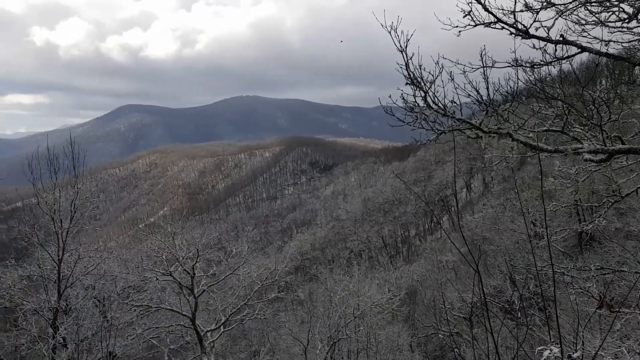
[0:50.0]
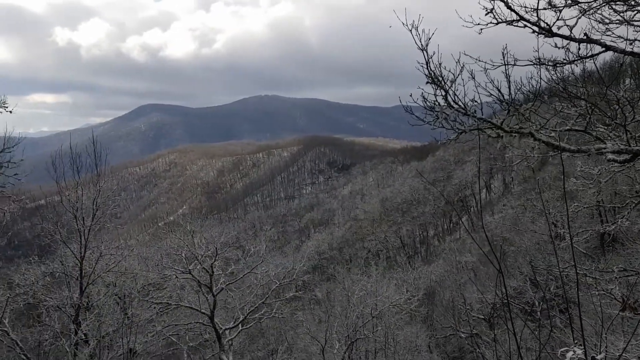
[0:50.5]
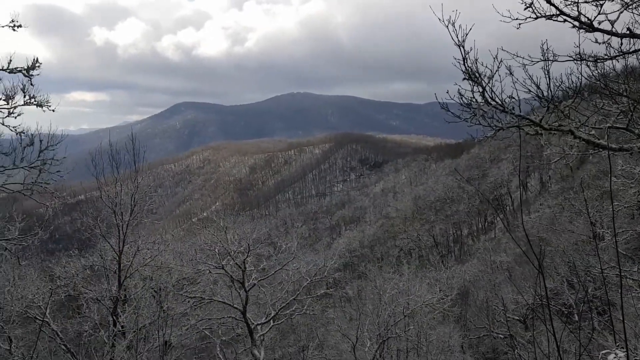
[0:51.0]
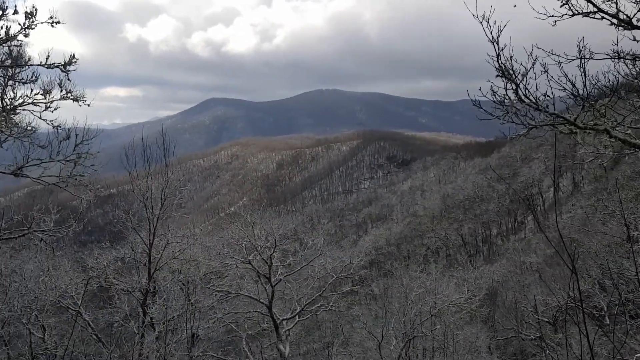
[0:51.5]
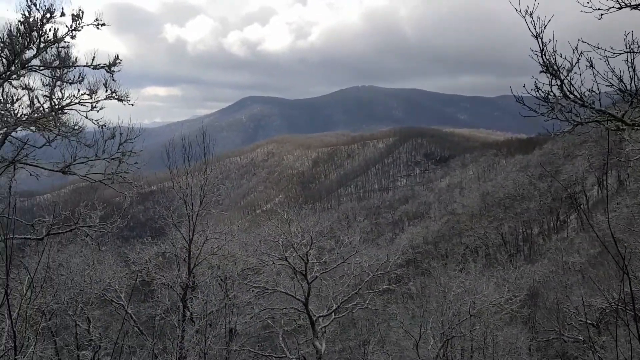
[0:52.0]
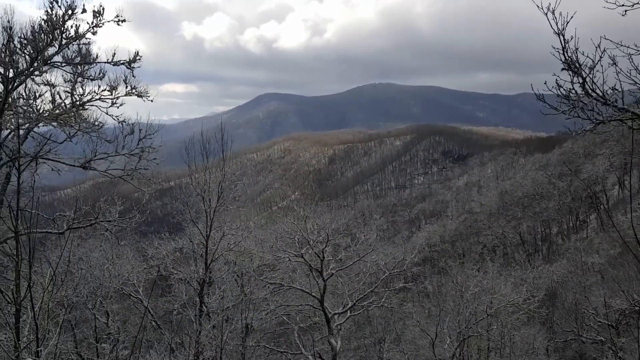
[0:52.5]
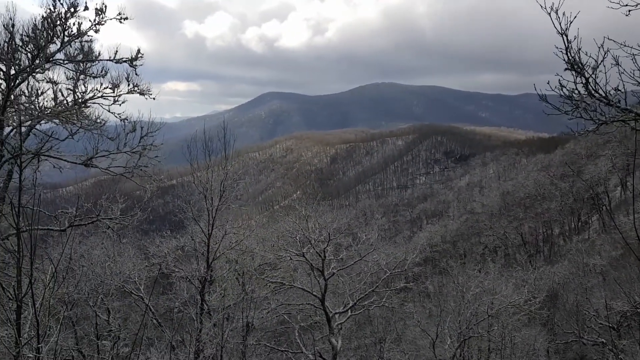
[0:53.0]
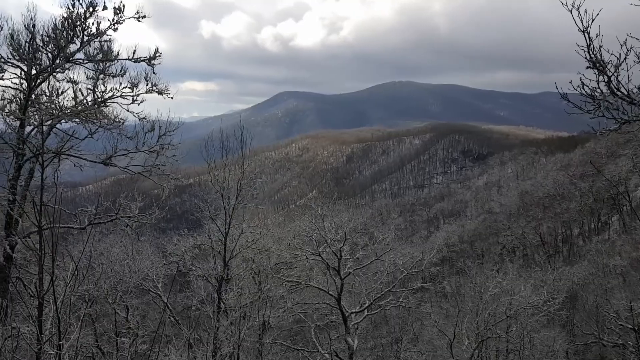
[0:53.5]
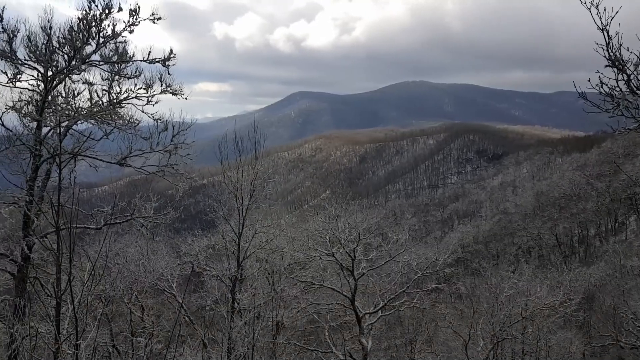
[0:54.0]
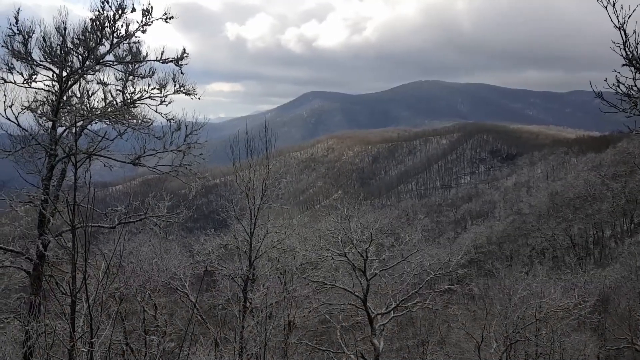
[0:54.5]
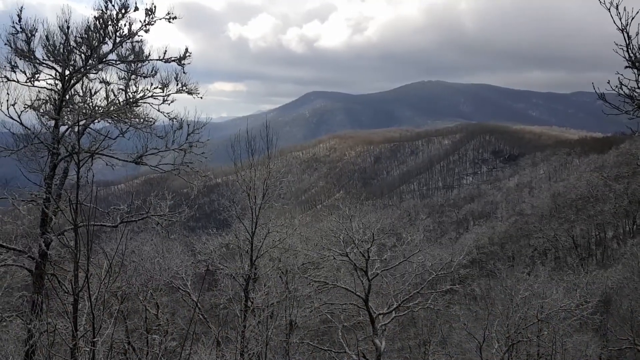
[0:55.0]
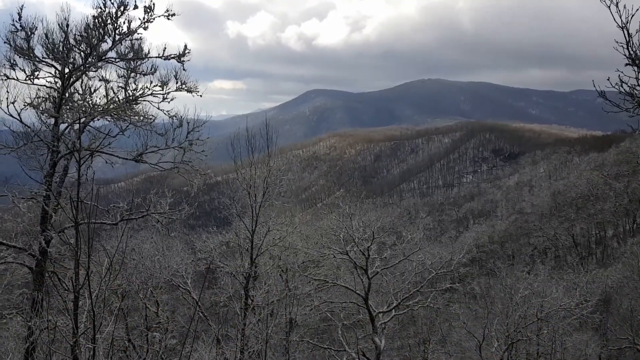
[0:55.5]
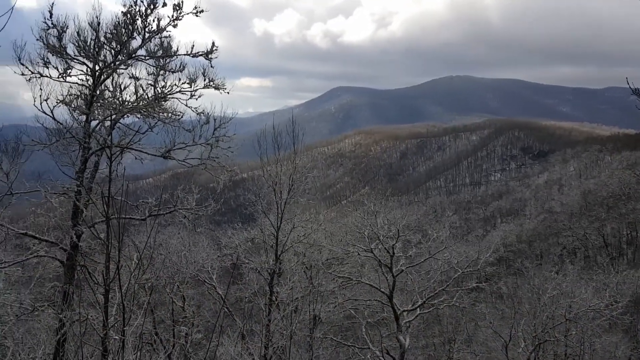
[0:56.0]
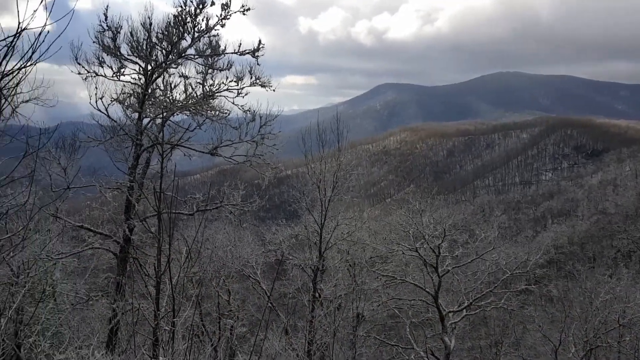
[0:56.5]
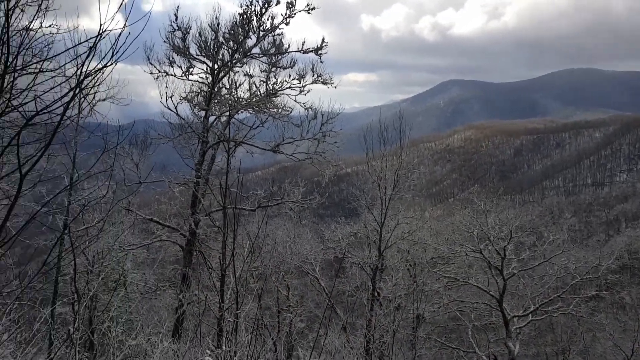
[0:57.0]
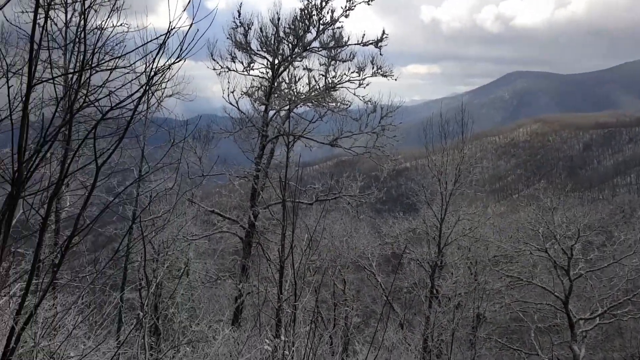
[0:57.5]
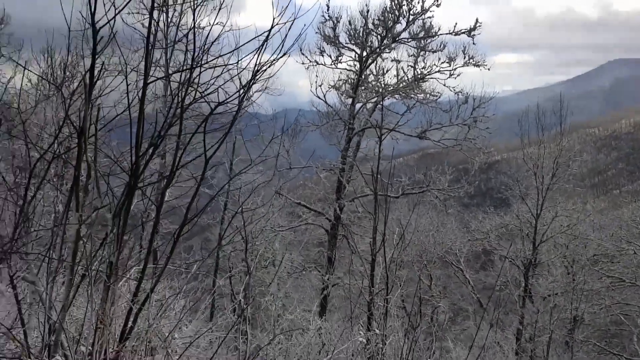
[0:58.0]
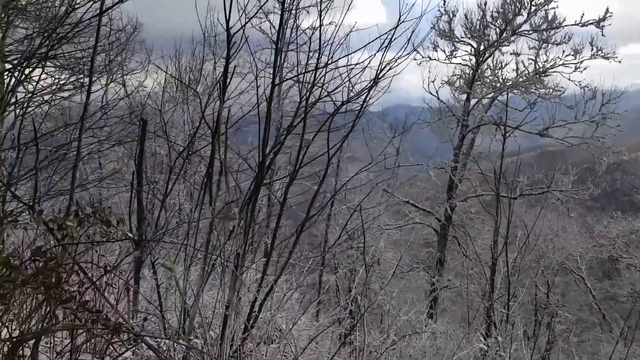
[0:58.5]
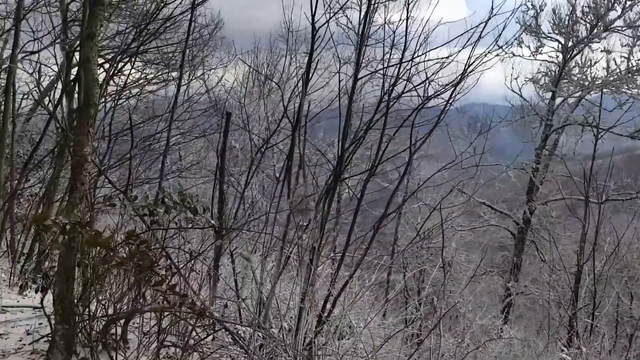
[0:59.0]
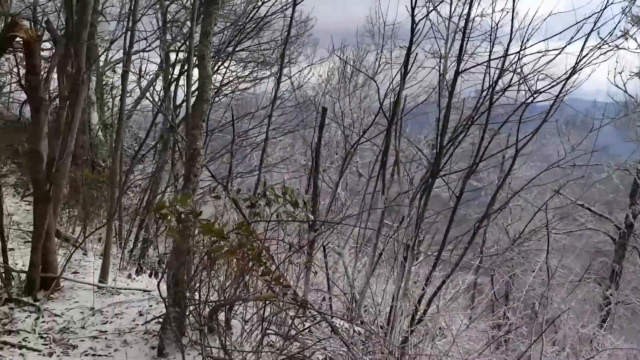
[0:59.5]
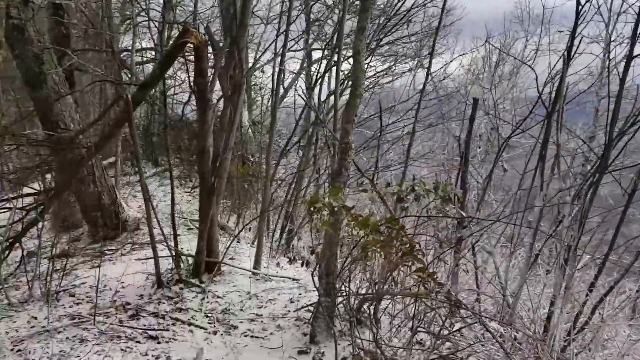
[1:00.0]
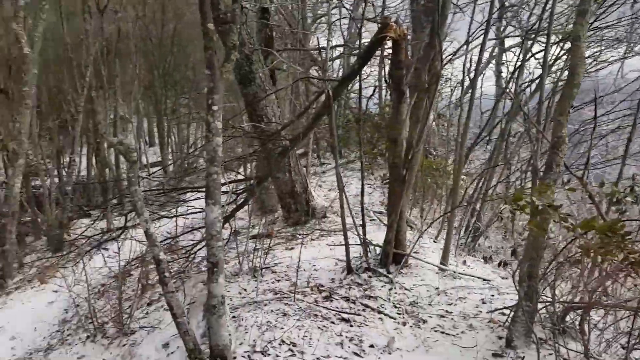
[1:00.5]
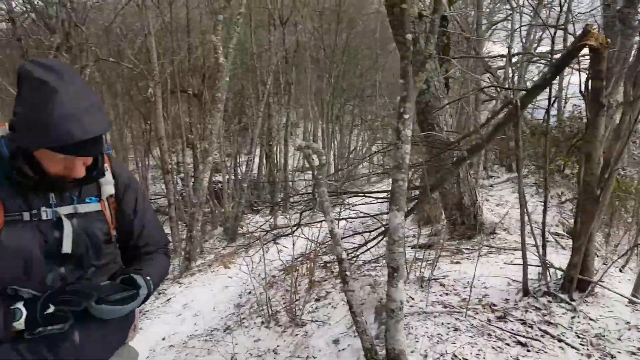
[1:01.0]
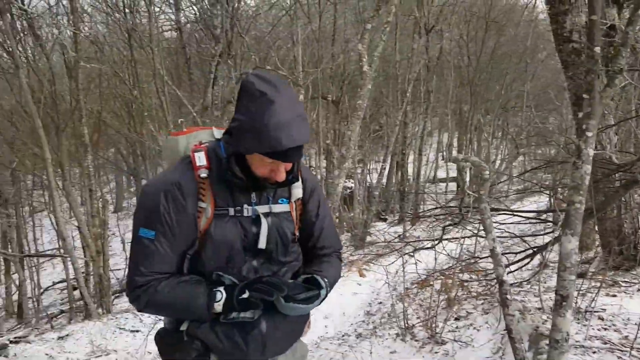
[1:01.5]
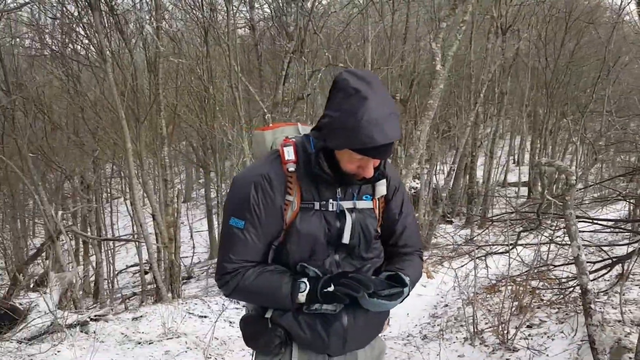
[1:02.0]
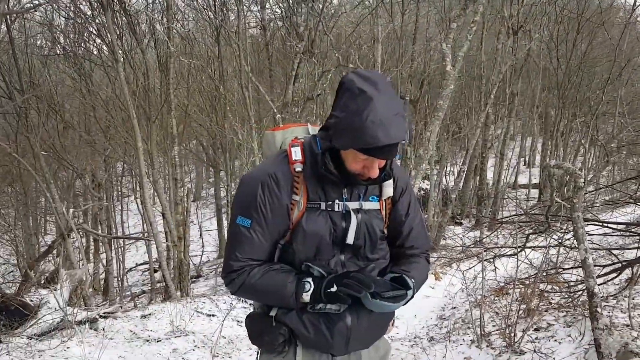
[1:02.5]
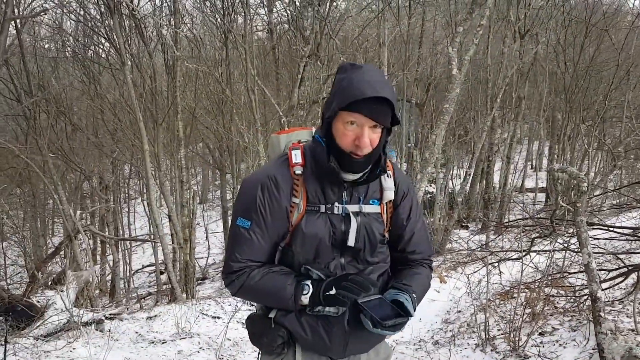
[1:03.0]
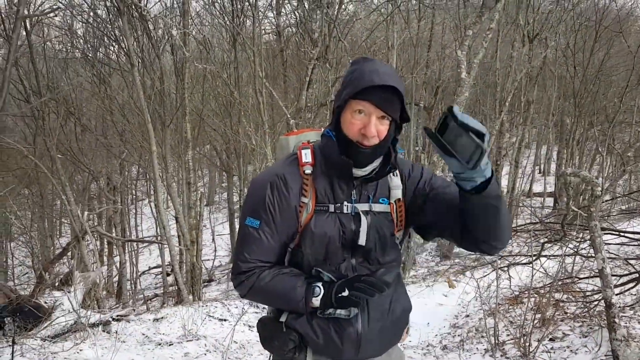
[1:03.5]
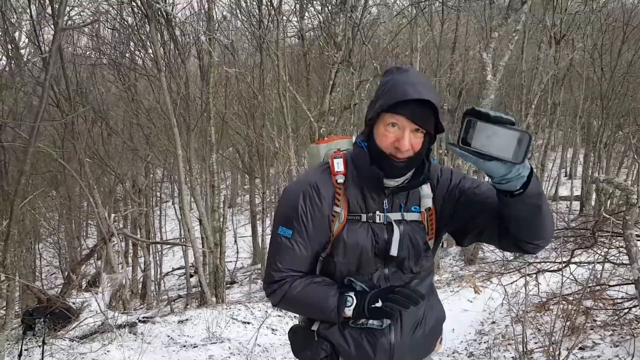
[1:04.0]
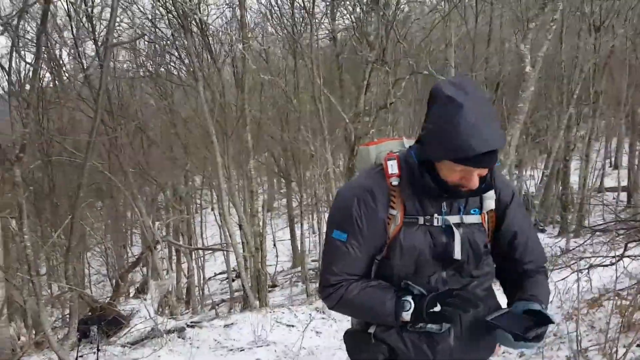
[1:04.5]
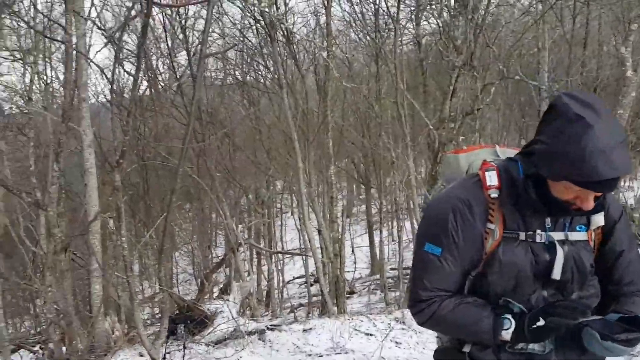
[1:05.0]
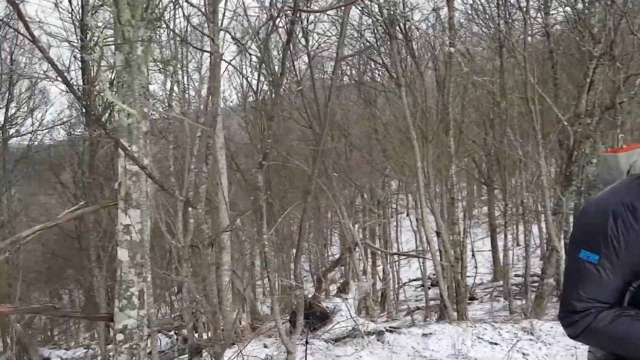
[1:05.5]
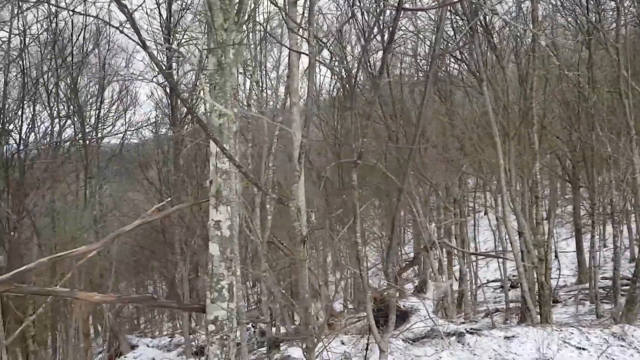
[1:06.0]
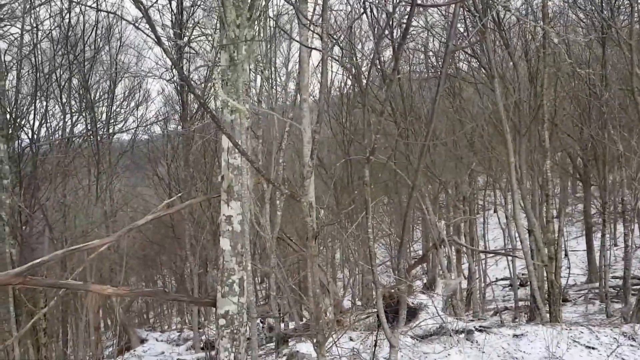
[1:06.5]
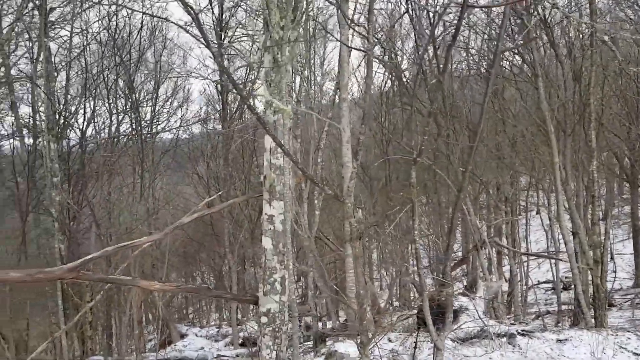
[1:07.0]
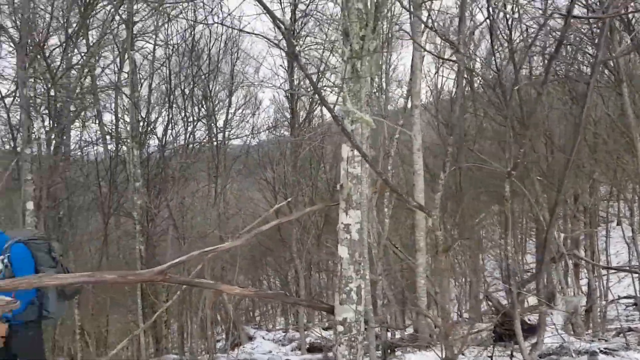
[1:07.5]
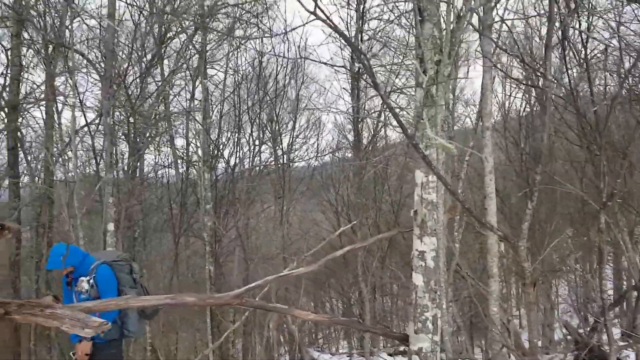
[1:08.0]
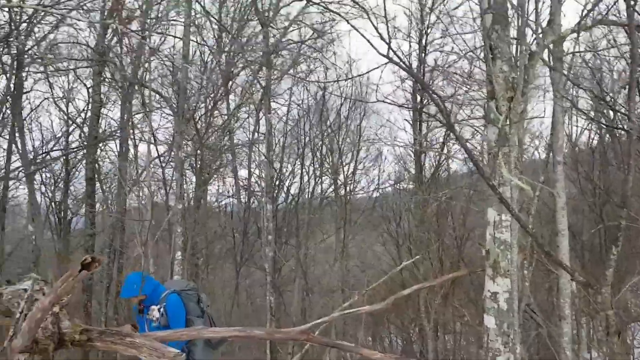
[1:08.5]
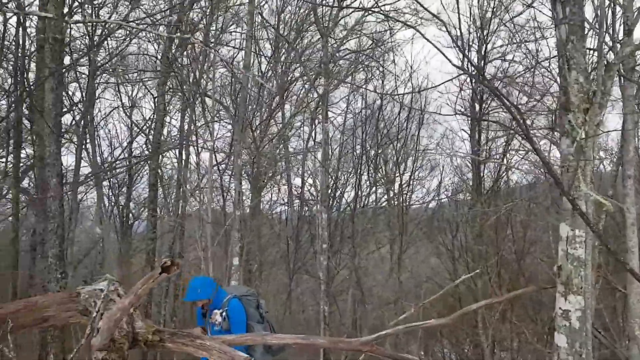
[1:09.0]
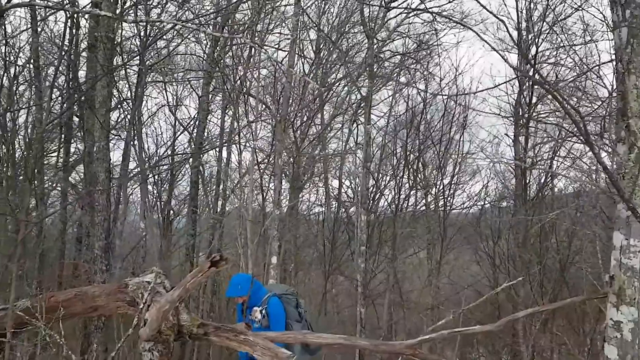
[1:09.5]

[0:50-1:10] The view looks out over the top of the mountain range and looks around. Hiking companions wear backpacks and gear and are prepared for winter weather; it appears to be winter in the woods. They are looking at their devices, possibly GPS or weather. They appear to be proceeding along the trail.